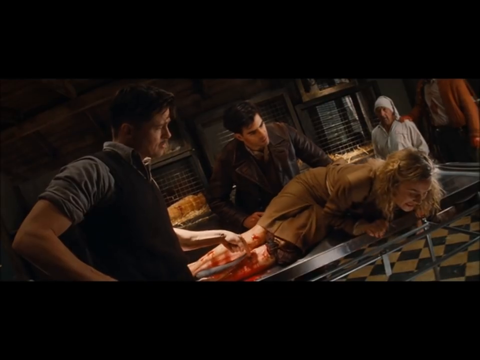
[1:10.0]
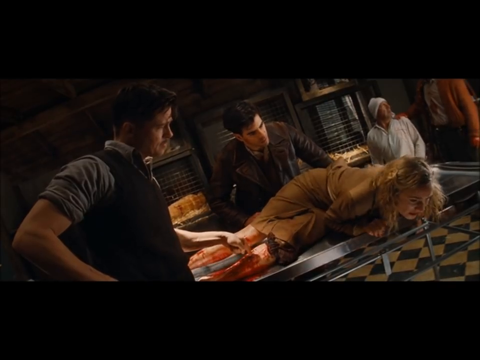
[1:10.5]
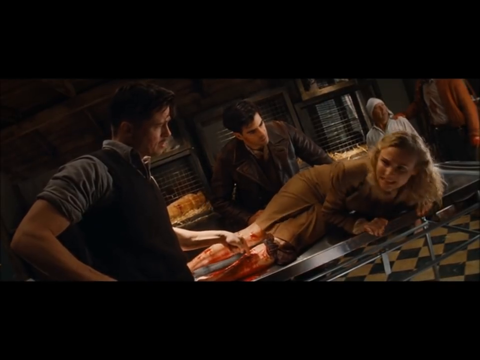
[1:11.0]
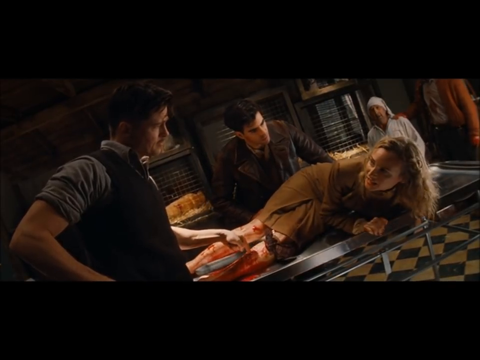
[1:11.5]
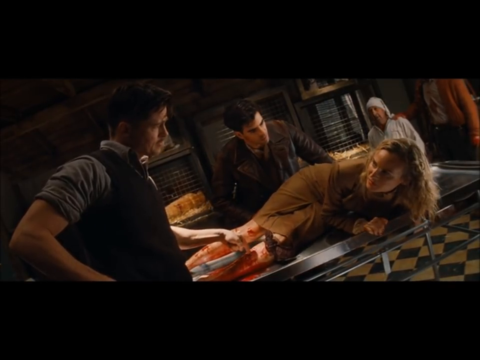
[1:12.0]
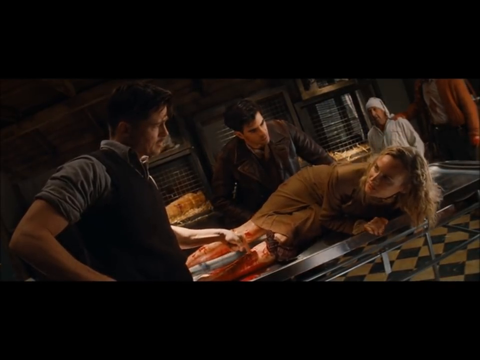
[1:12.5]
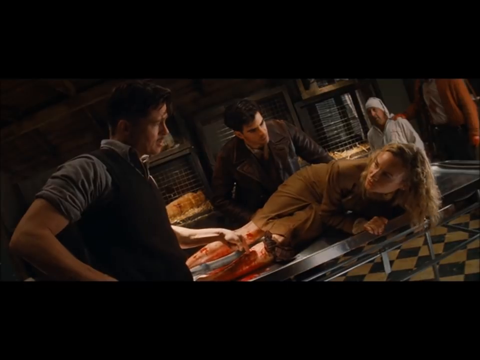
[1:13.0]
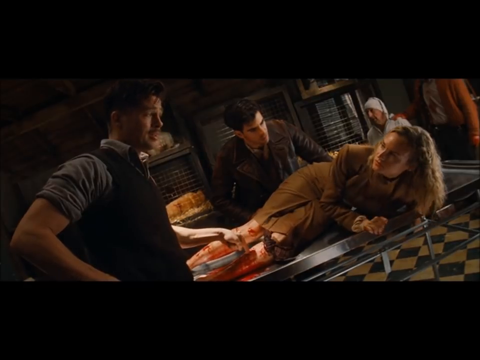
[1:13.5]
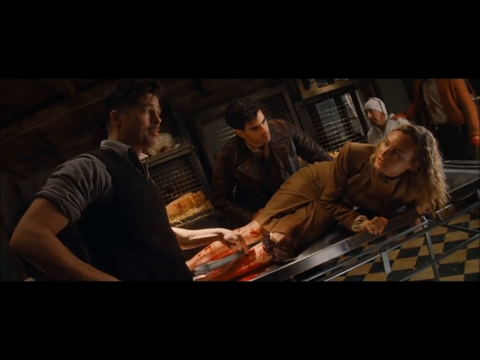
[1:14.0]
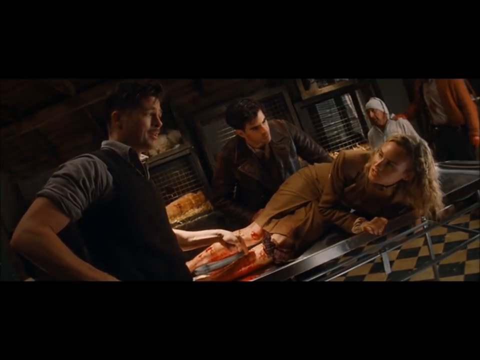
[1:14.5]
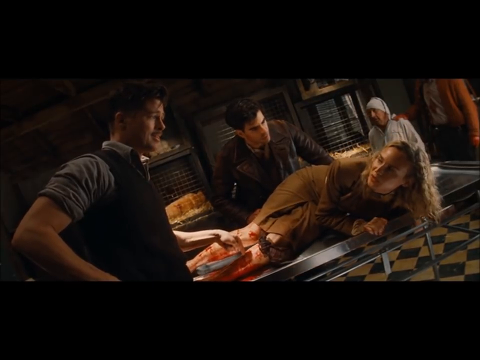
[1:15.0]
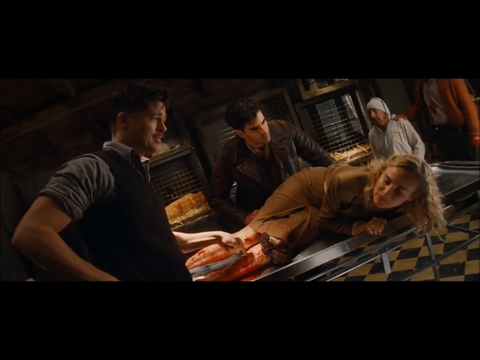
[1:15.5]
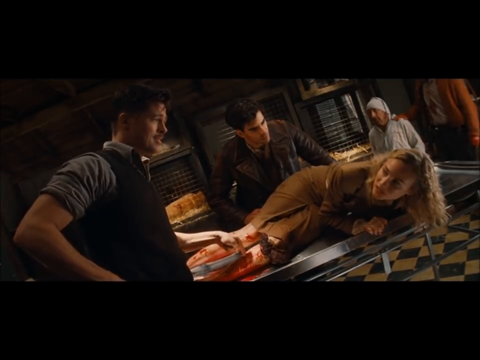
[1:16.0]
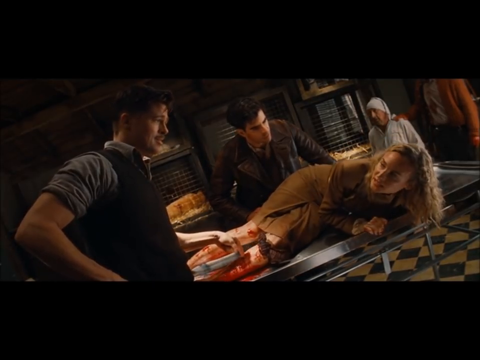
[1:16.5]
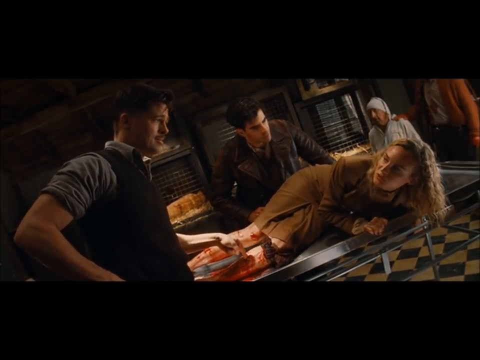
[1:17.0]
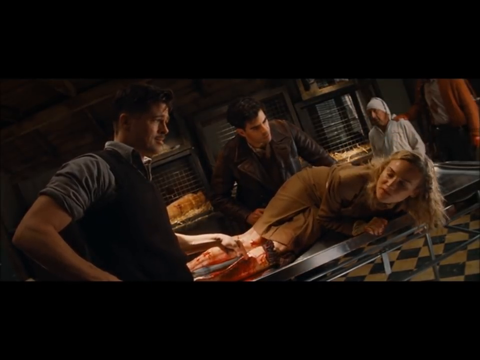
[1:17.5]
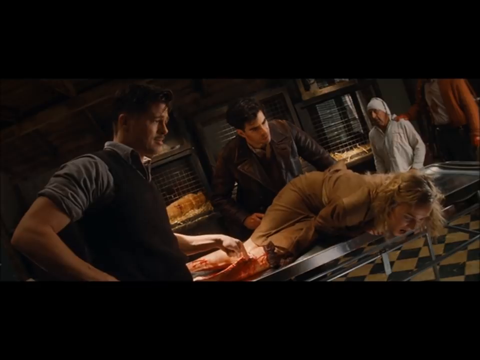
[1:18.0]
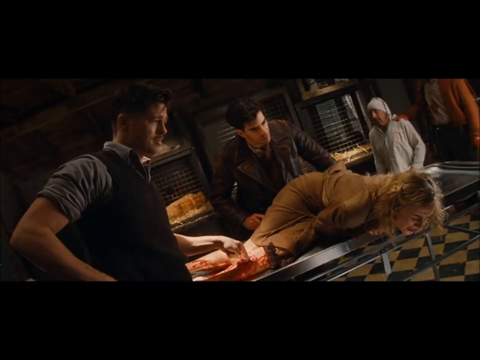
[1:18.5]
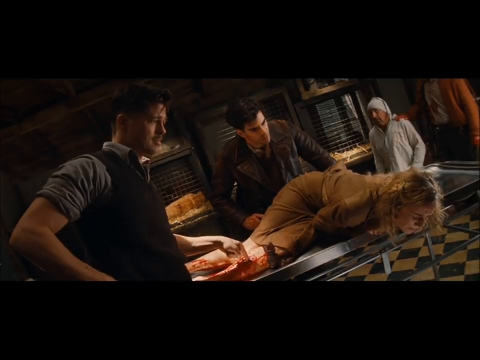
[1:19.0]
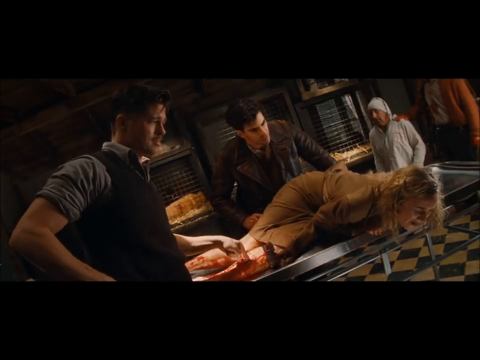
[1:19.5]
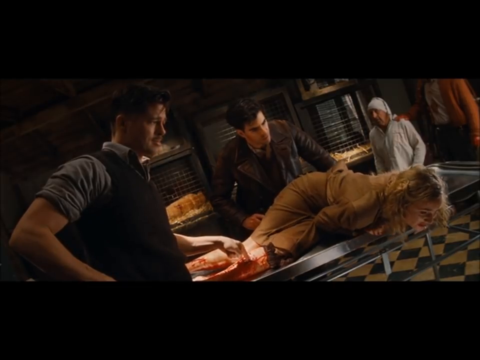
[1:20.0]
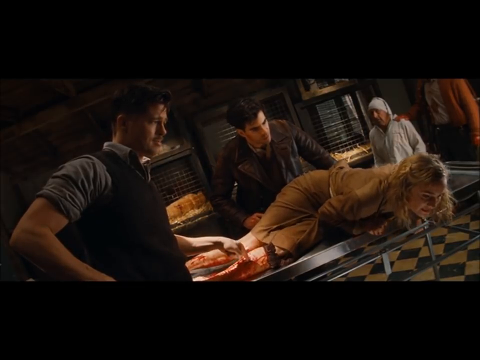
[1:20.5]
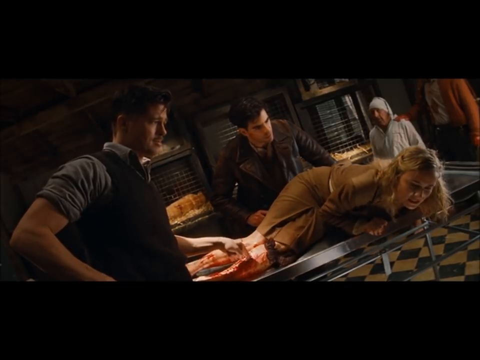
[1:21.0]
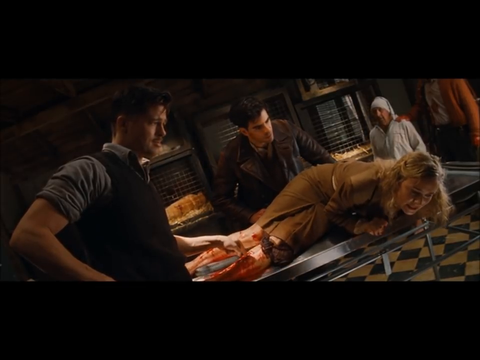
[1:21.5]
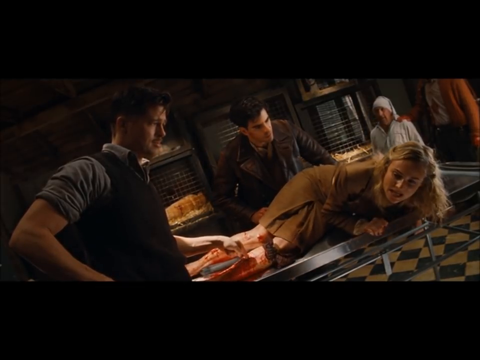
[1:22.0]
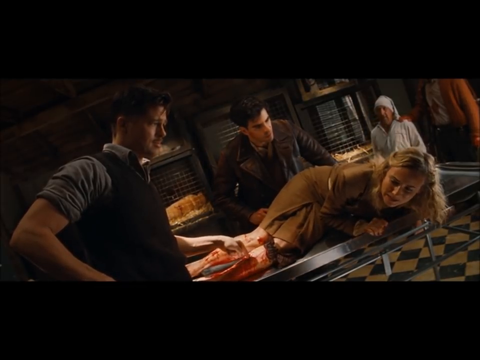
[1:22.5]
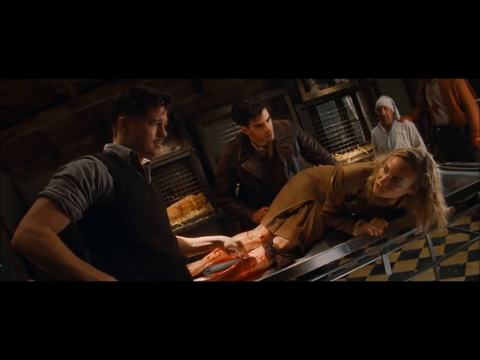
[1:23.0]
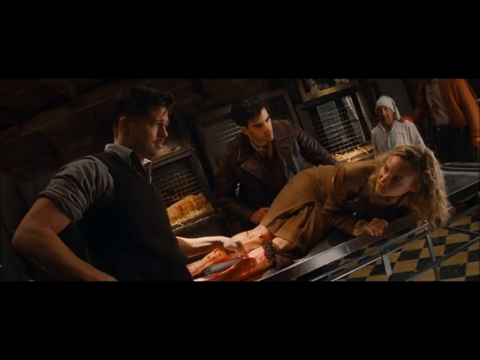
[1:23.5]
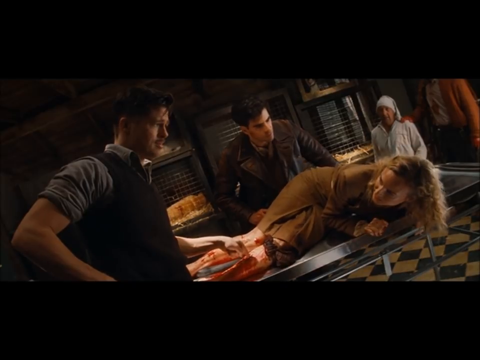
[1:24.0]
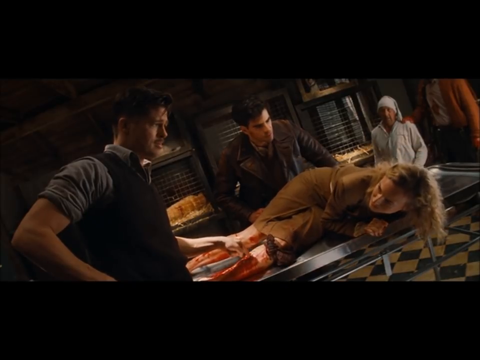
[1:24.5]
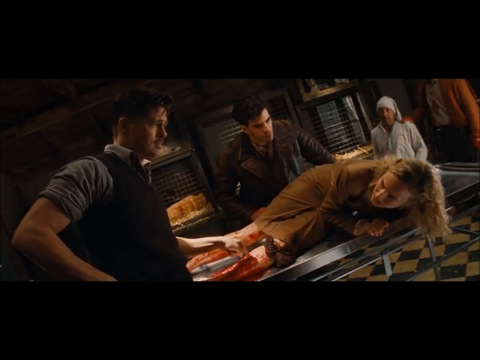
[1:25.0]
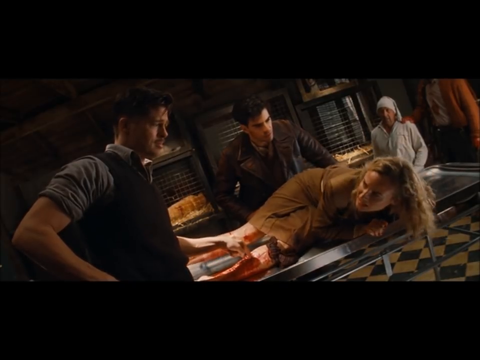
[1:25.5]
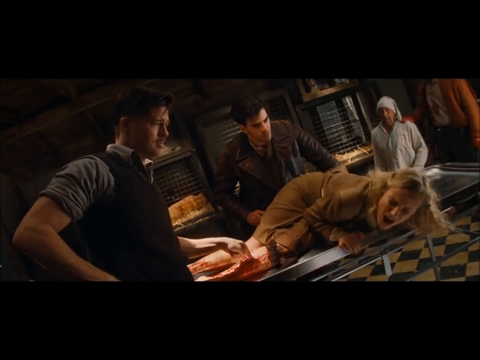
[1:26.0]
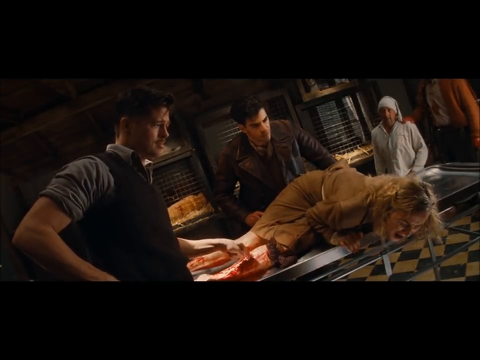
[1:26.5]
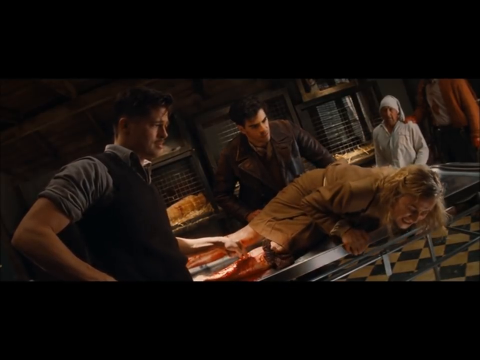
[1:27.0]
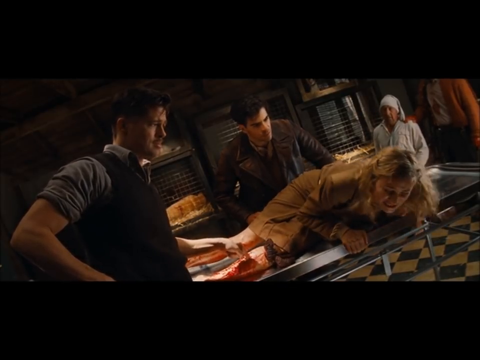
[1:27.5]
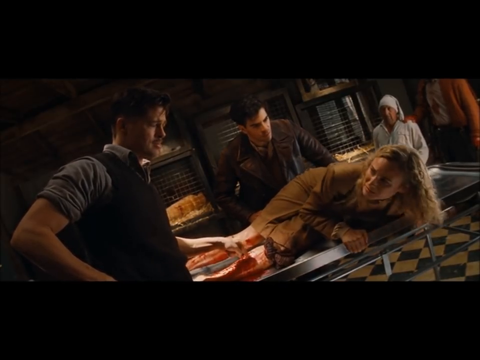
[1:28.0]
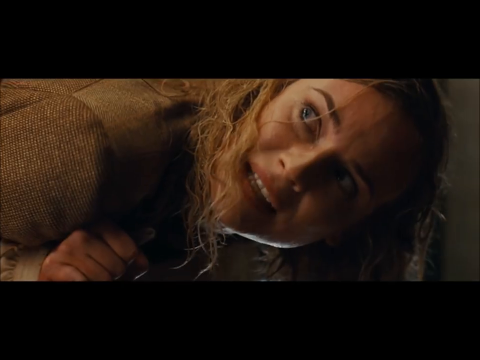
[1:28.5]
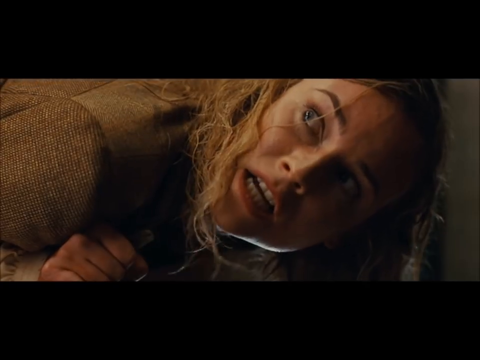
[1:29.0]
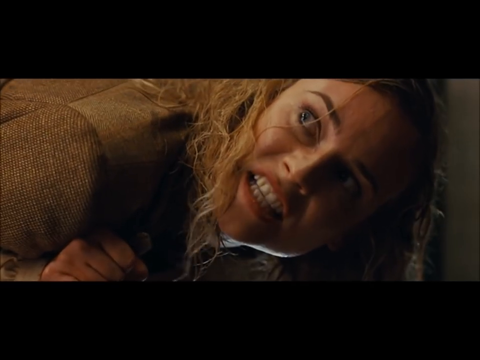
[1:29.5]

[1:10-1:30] In a dimly lit room with a blue and white checkered floor, multiple people surround a woman lying on a metal bed, struggling, with bloody legs. Two of the men look at her, while another two are in the back: one sitting in white clothing and the other with his hand on the sitting man. The man next to her interrogates her as she struggles, his finger placed on her bloody wound, which seems to cause her a lot of pain. The woman starts talking to the man with his finger on her; she seems angry and makes faces at him, struggling a lot because of the pain.